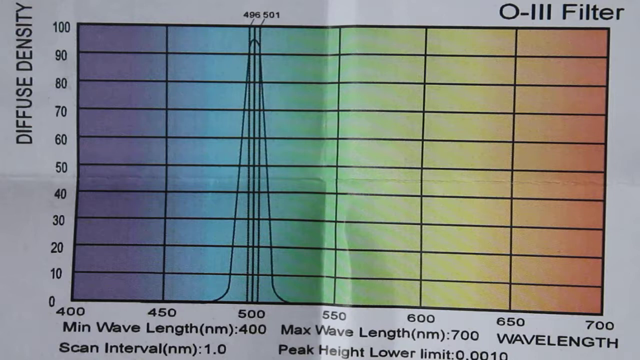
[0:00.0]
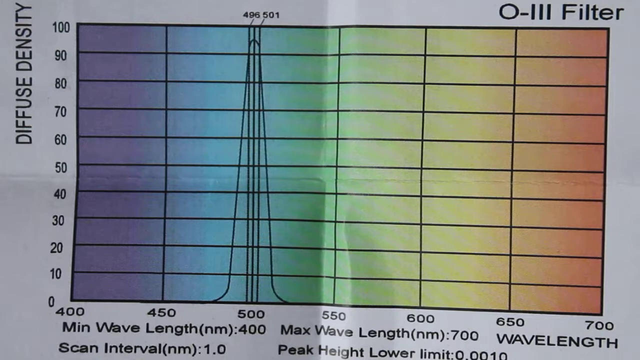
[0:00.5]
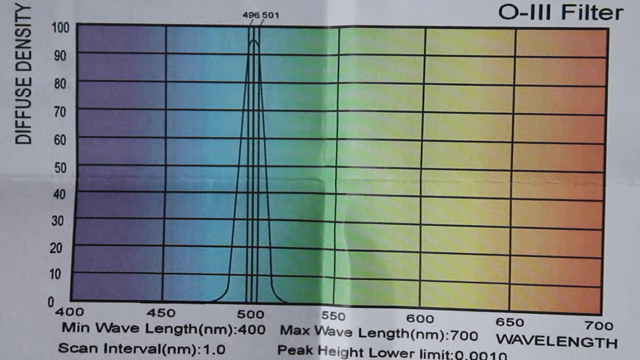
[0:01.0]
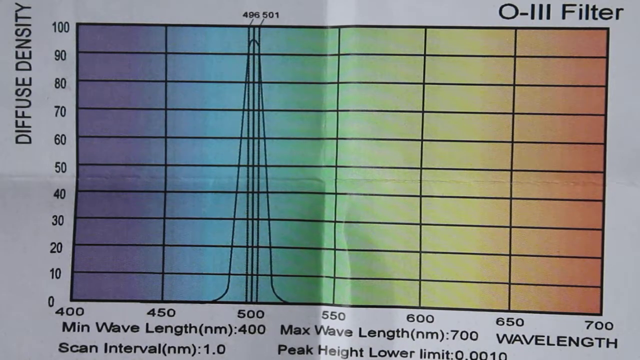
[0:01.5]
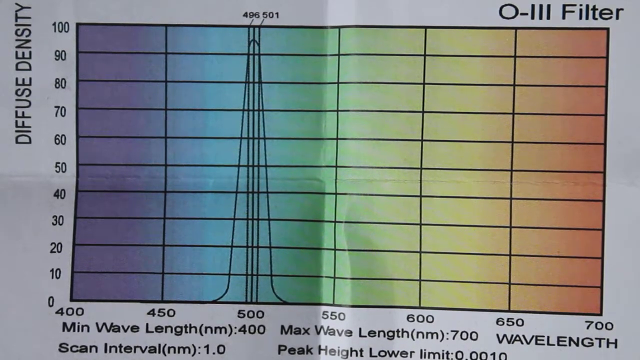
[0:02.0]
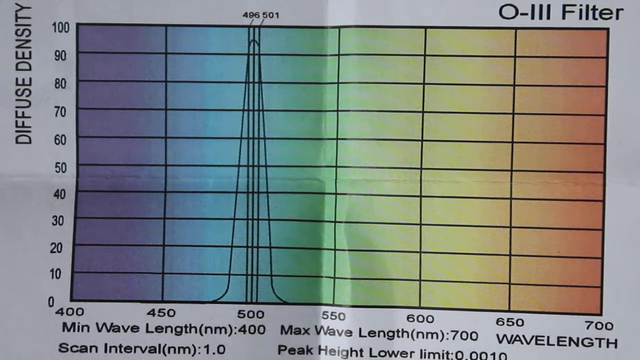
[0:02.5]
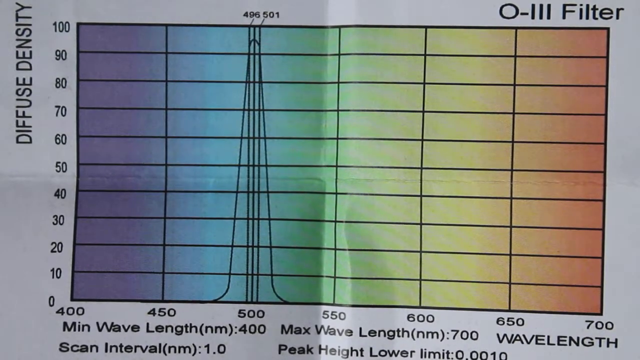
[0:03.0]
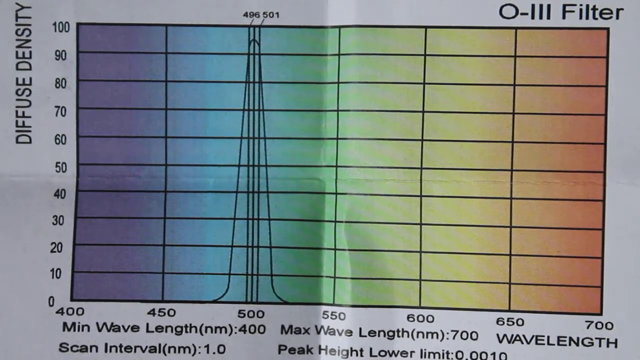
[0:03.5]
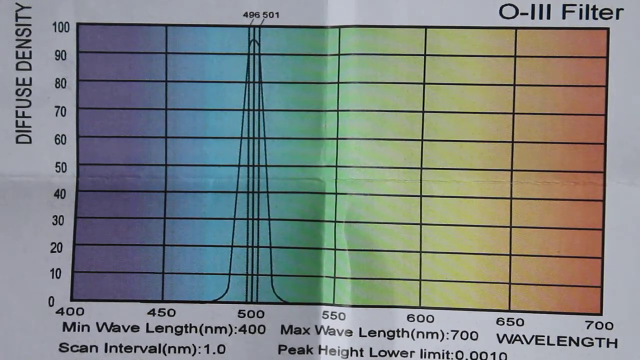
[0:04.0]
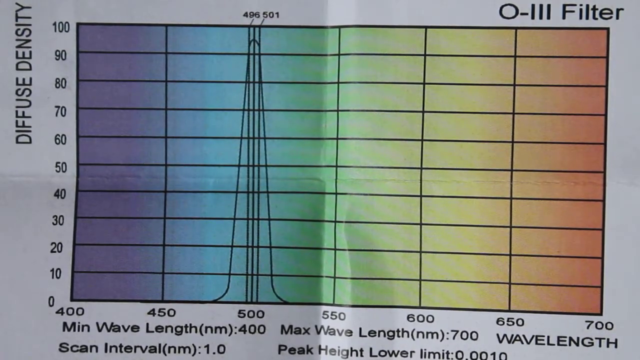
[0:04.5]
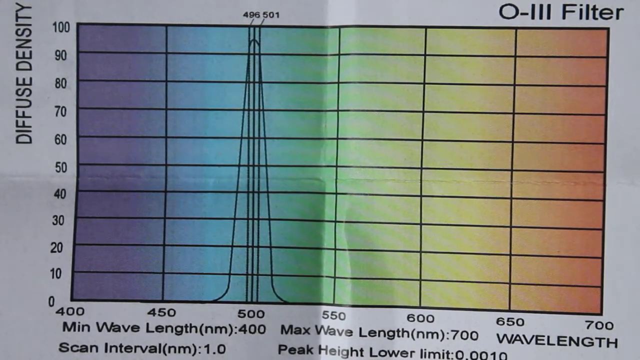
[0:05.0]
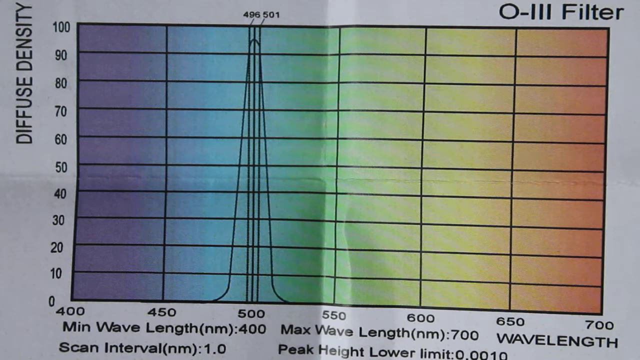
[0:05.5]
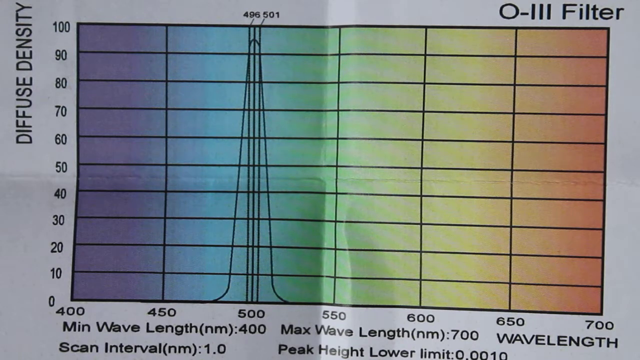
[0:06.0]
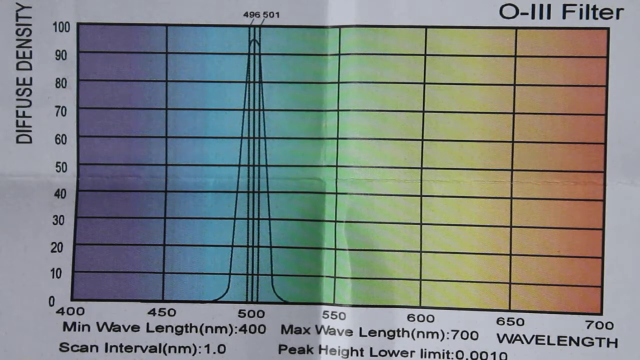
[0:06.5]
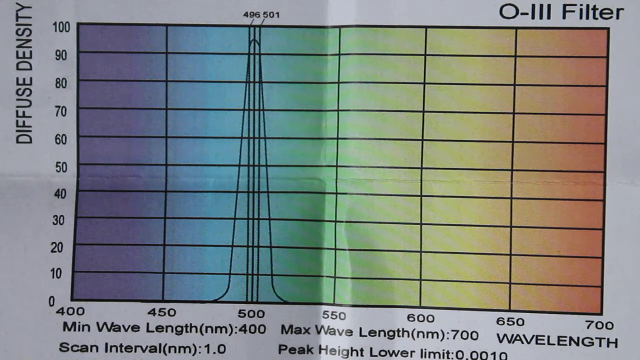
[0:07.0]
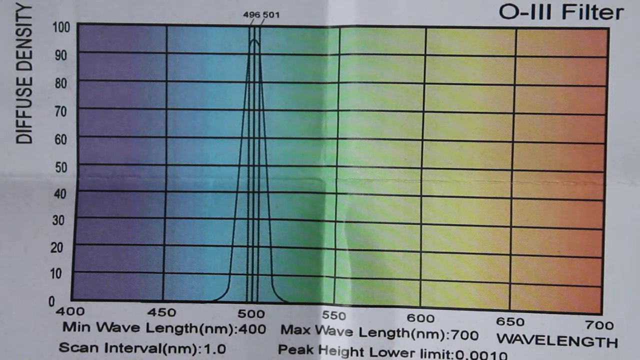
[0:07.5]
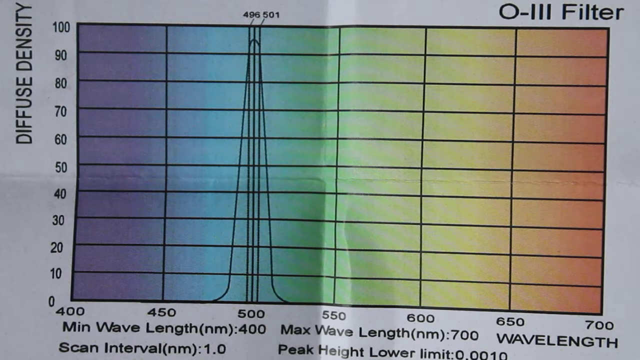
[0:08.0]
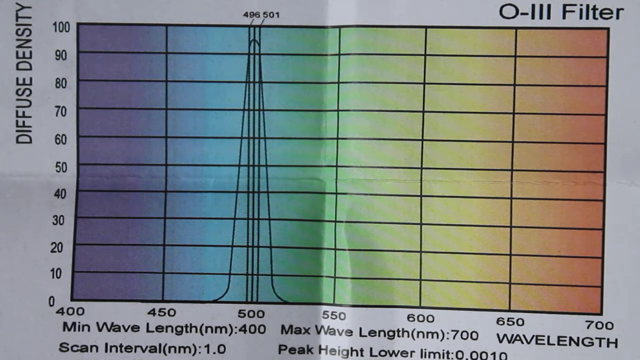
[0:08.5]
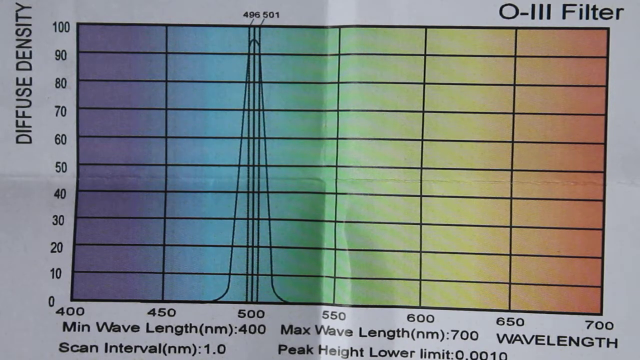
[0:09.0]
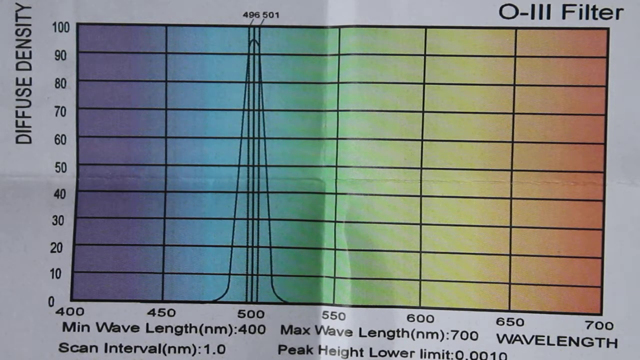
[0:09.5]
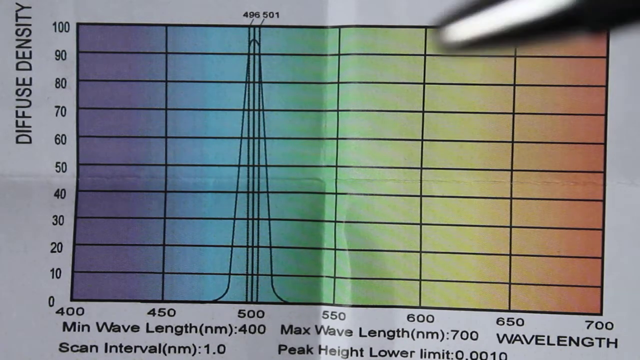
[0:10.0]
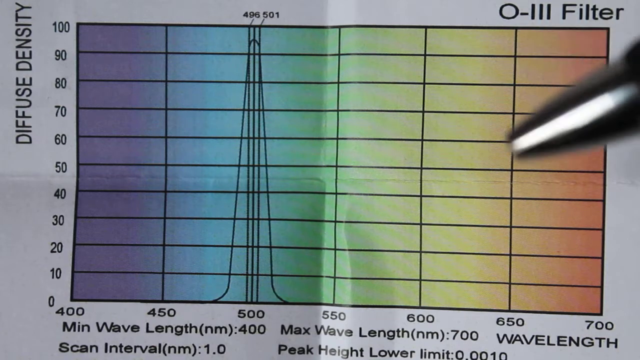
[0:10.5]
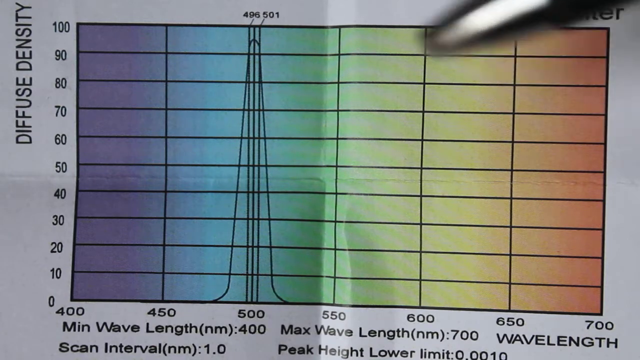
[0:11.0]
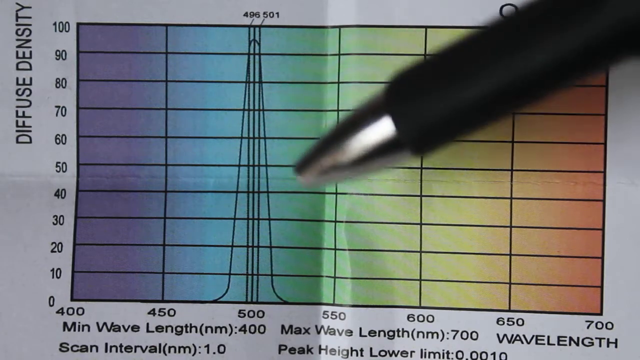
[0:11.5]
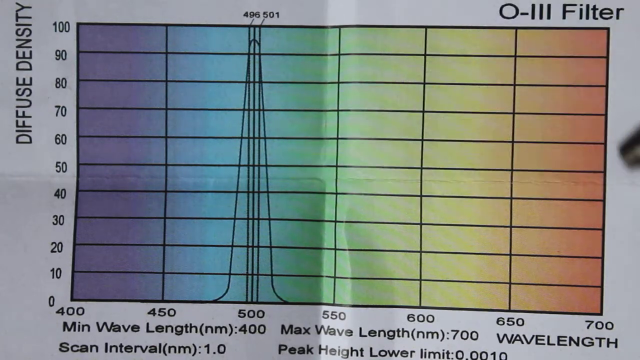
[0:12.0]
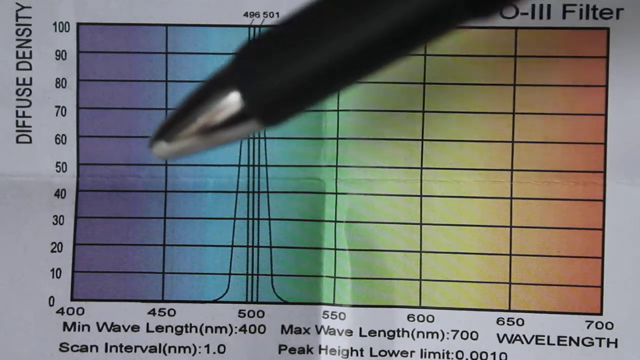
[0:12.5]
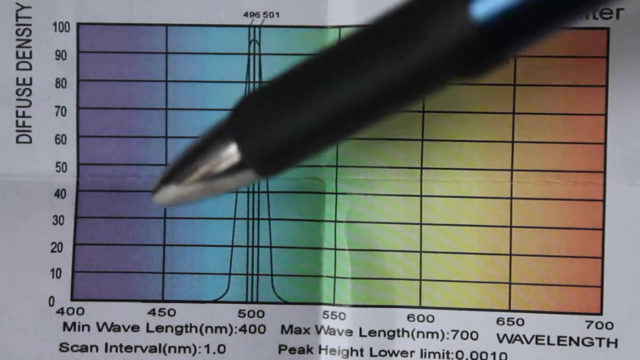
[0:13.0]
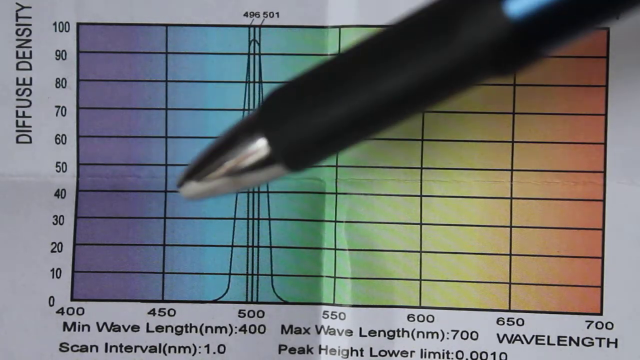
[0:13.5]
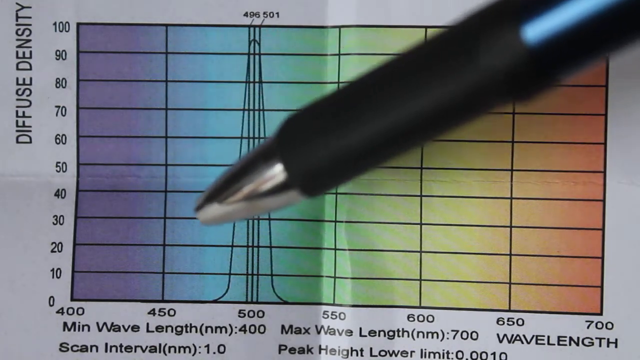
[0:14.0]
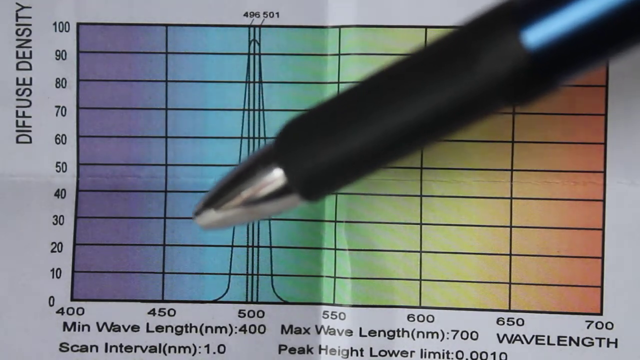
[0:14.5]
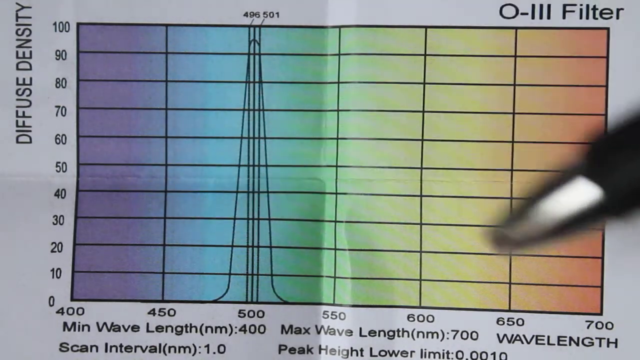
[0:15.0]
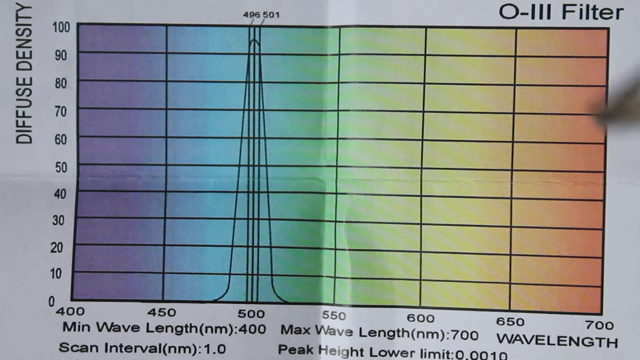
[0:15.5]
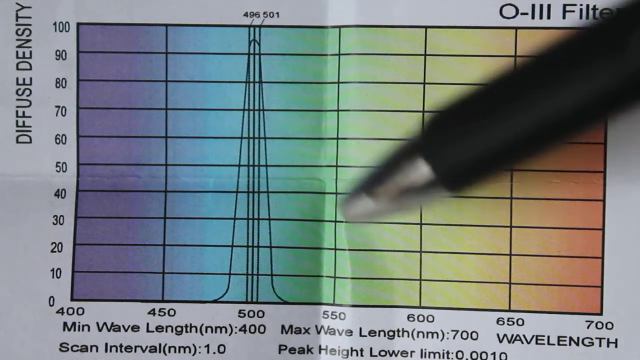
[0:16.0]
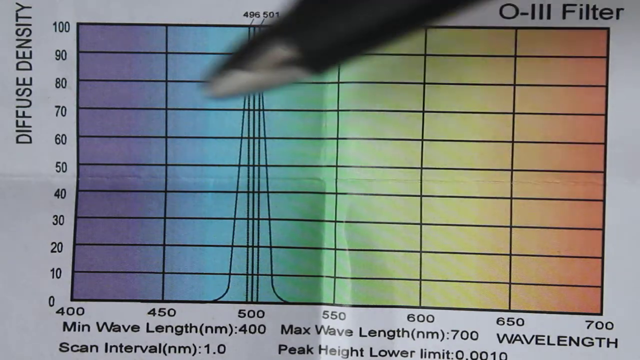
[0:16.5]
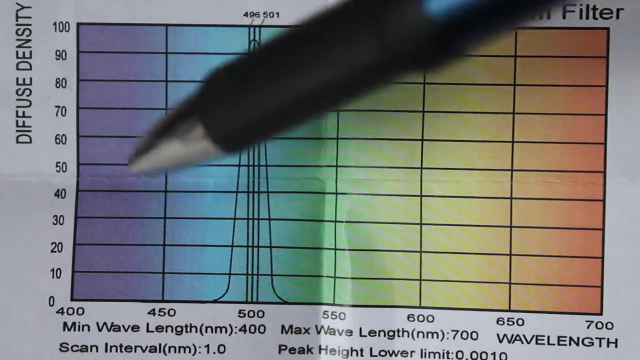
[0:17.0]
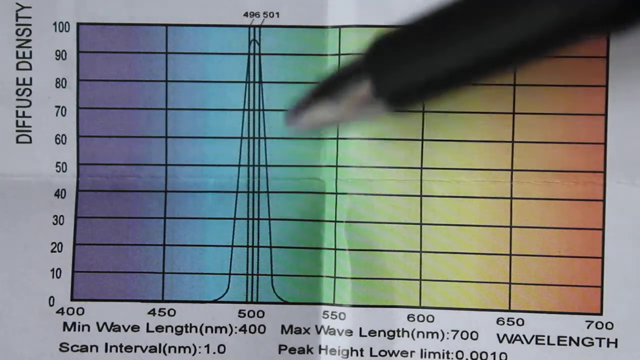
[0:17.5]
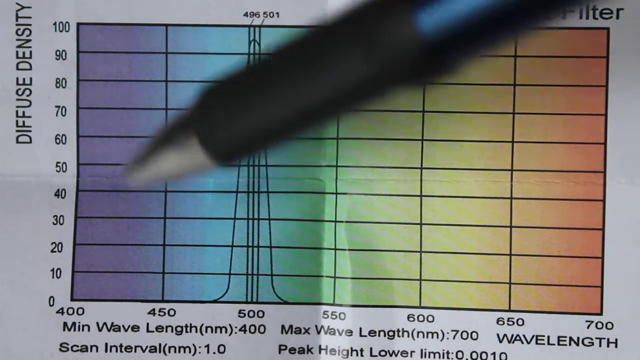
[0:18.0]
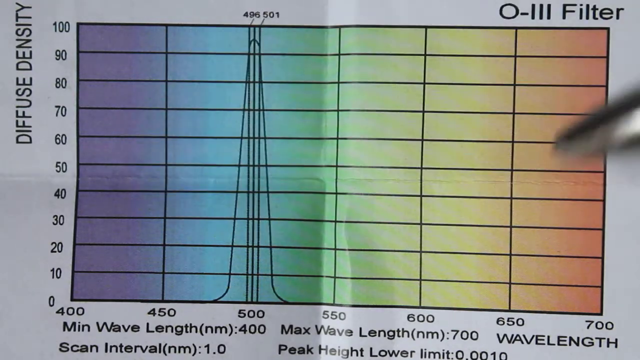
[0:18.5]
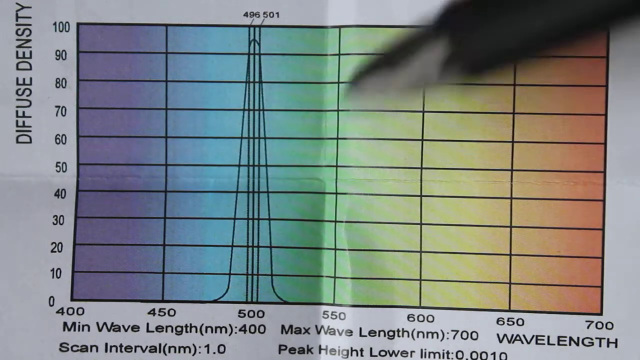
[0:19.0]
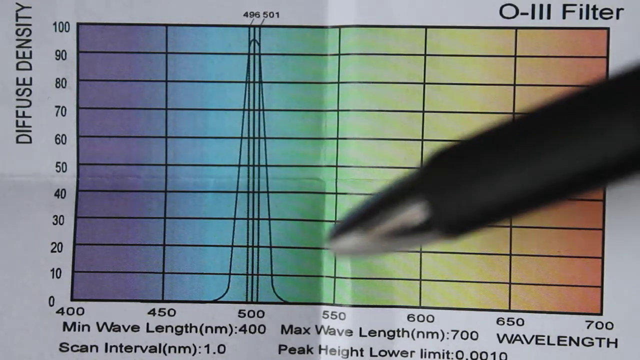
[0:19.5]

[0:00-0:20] The video begins with a piece of paper showing a graph in the upper right-hand corner. The graph is labeled "O-3 filter". Its vertical side, running from top to bottom, is labeled "diffuse density" with the numbers 0 to 100 in increments of 10. Along the bottom, the wavelength runs from left to right with the numbers 400 to 700 in increments of 50. The graph has purple, blue, green, yellow, and orange colors. On the lower part of the screen are the words "minimum wavelength 400, max wavelength 700, wavelength scan interval 1.0, peak height lower limit 0.0010". Throughout, a person holds up a pen and points it at different angles in the graph. The video is rectangular in shape.